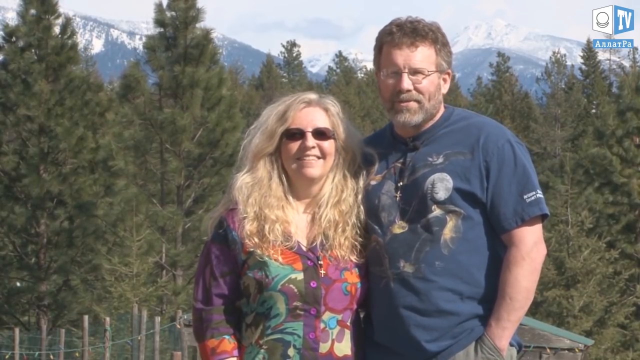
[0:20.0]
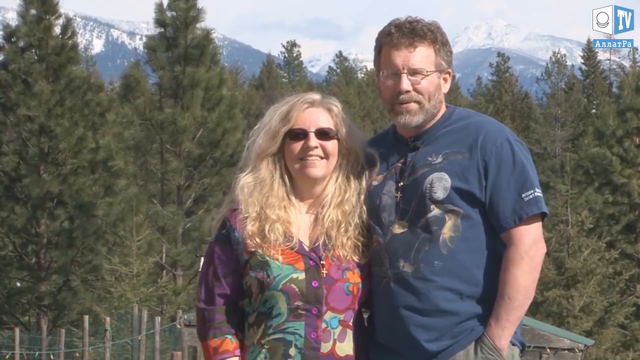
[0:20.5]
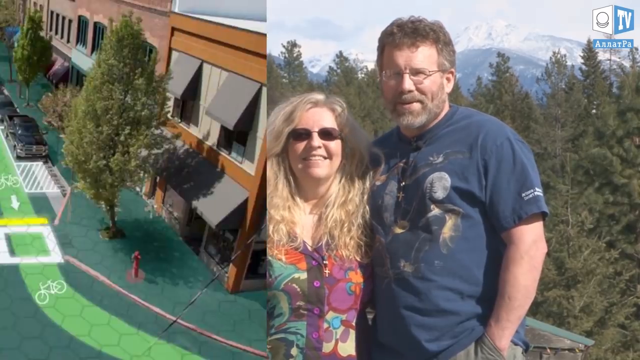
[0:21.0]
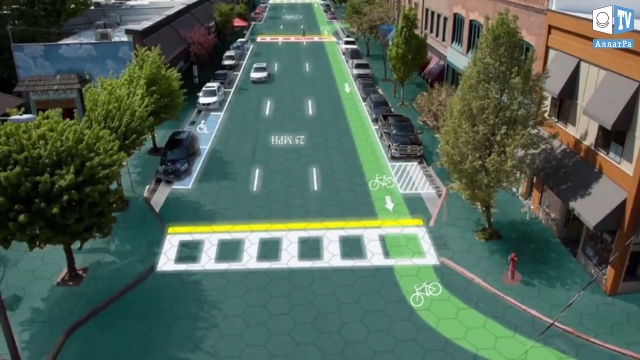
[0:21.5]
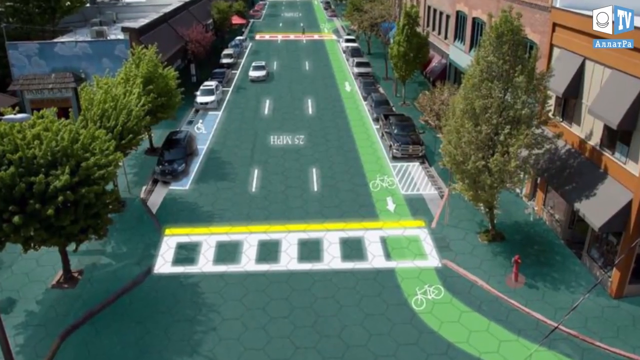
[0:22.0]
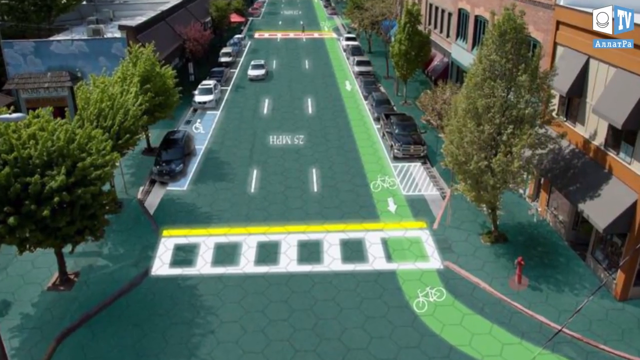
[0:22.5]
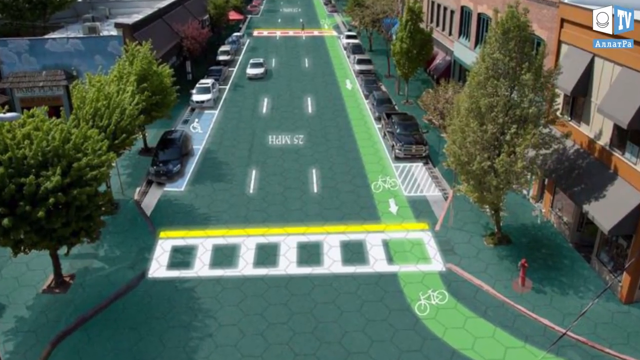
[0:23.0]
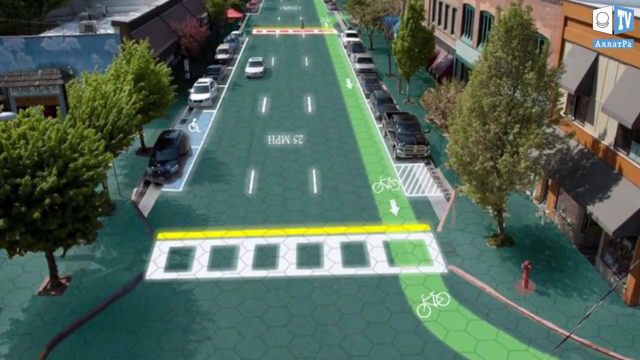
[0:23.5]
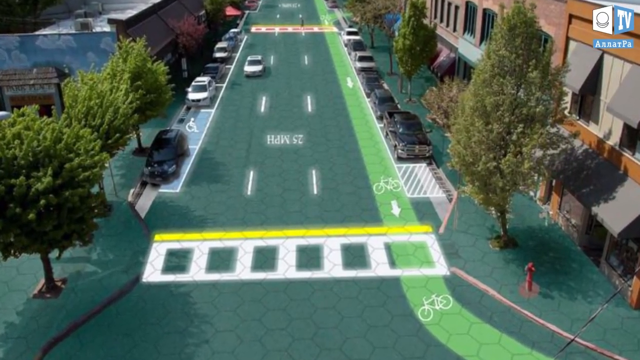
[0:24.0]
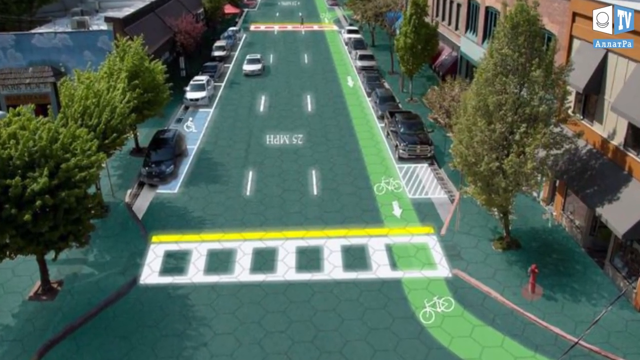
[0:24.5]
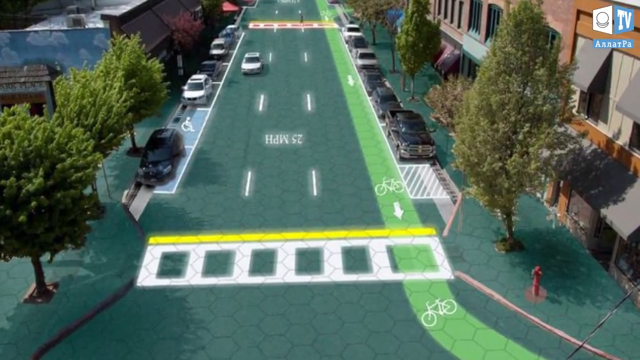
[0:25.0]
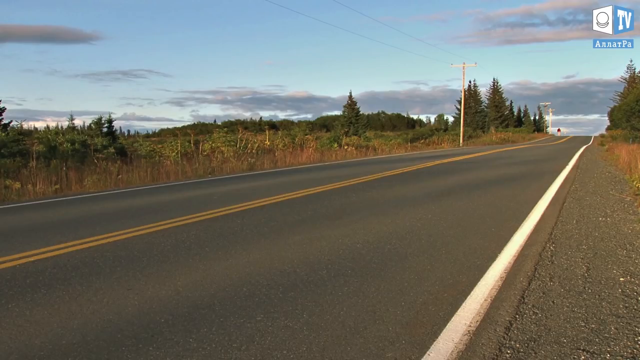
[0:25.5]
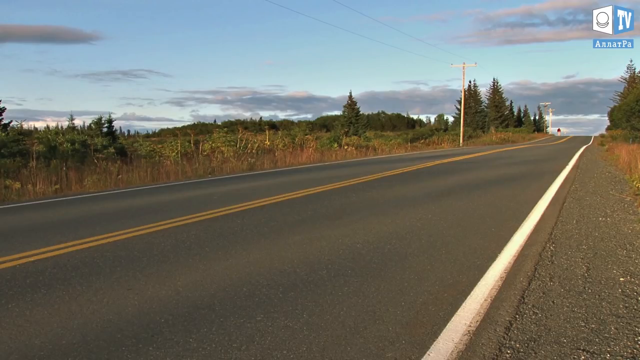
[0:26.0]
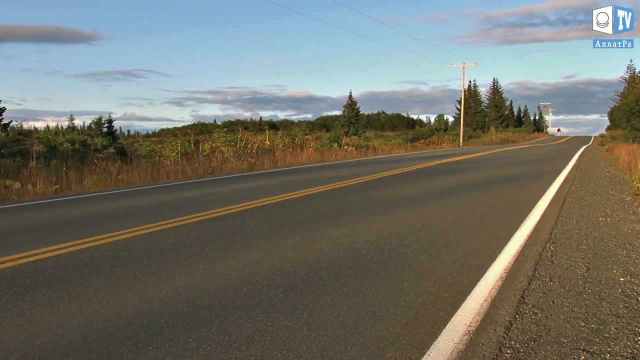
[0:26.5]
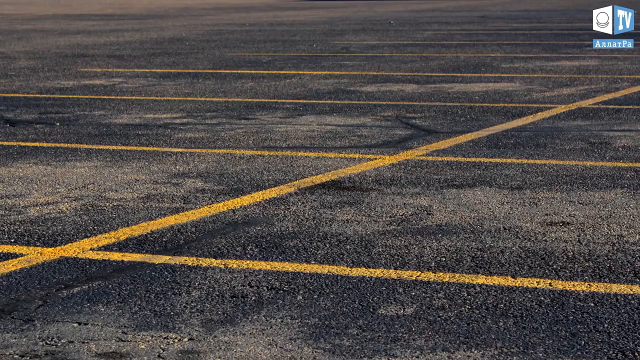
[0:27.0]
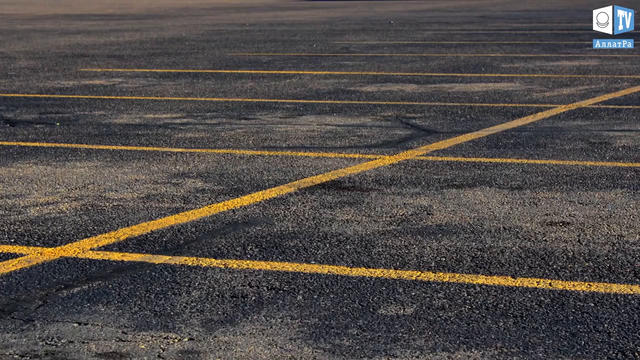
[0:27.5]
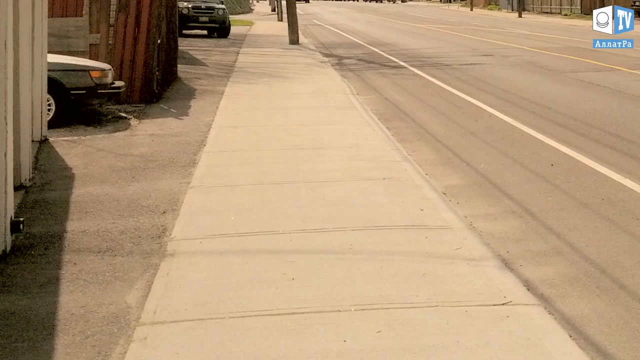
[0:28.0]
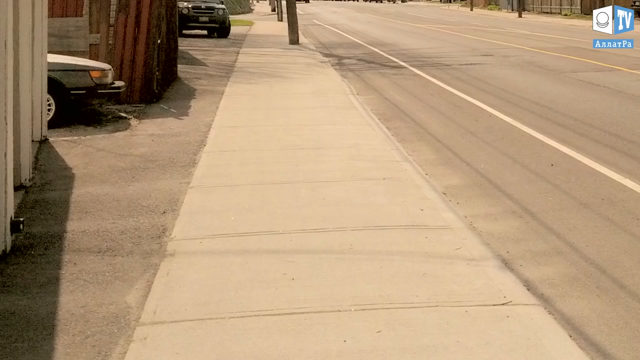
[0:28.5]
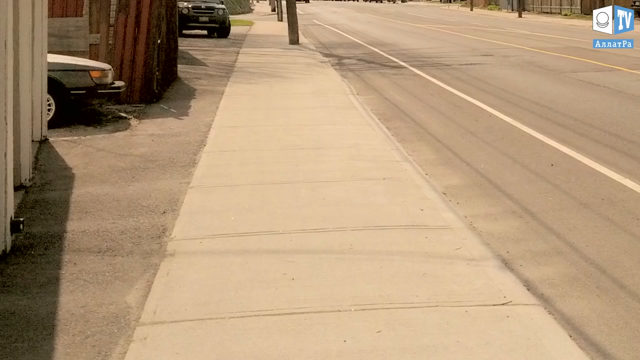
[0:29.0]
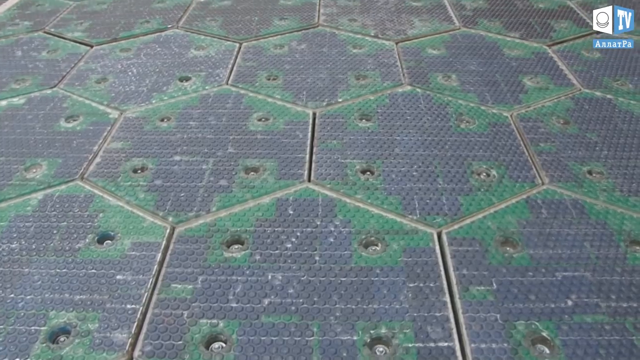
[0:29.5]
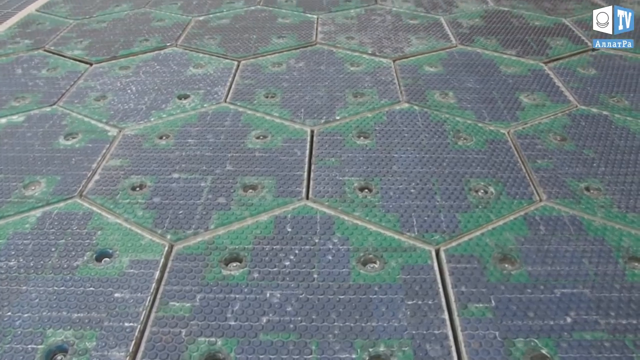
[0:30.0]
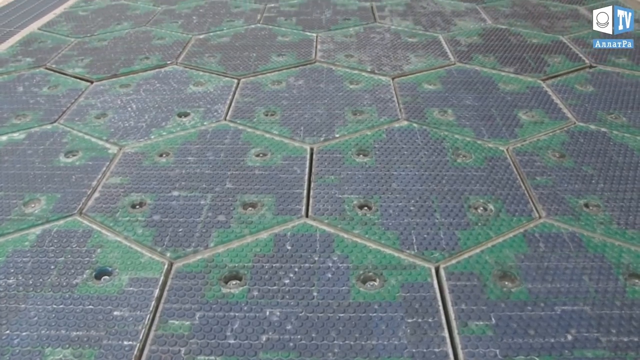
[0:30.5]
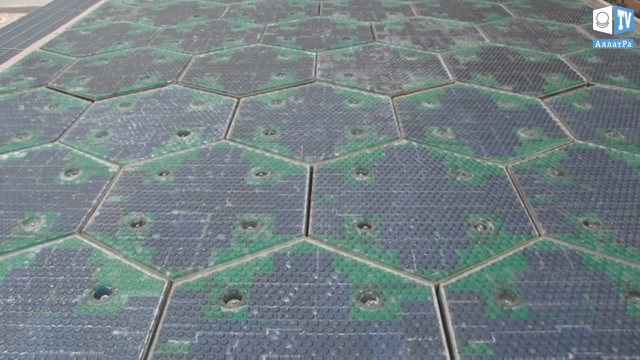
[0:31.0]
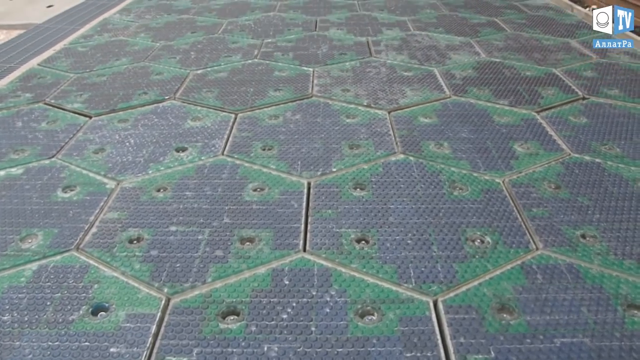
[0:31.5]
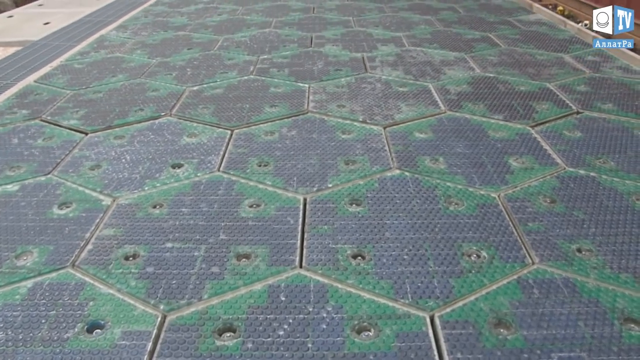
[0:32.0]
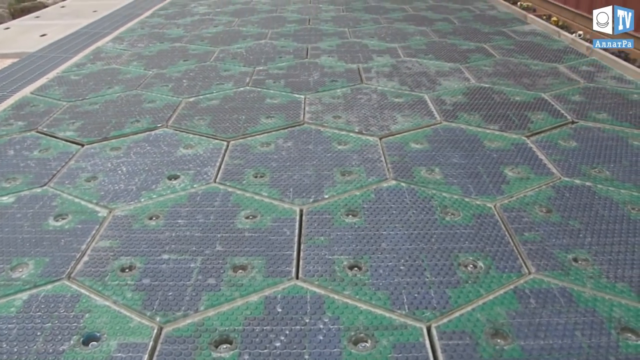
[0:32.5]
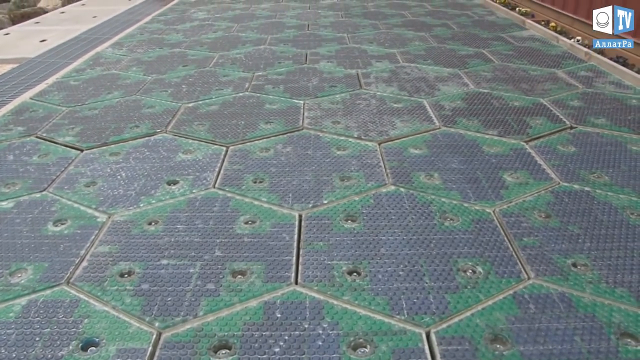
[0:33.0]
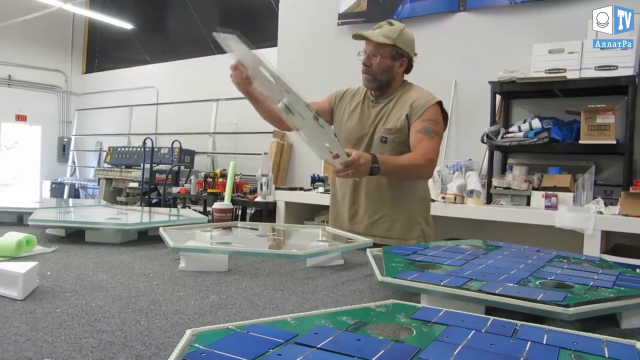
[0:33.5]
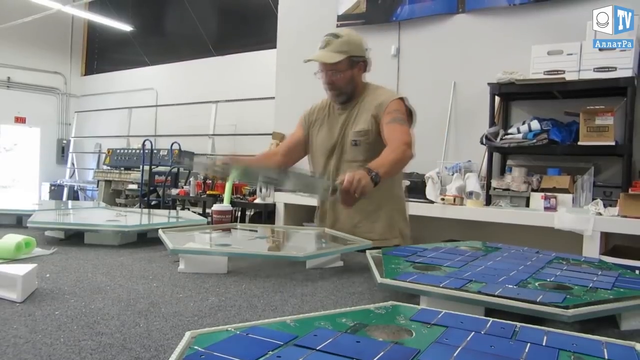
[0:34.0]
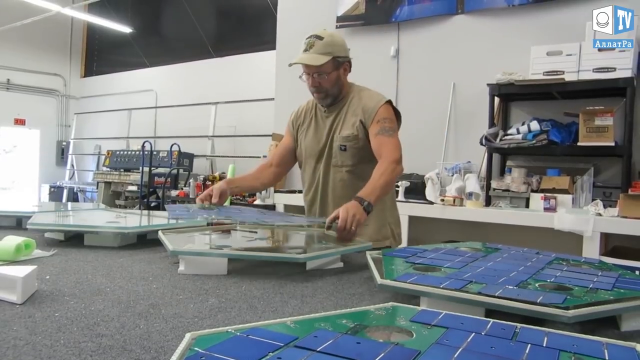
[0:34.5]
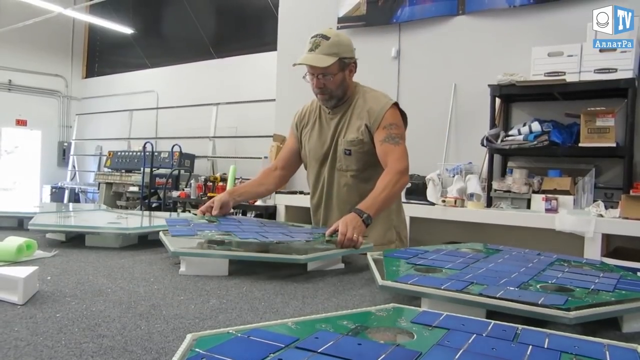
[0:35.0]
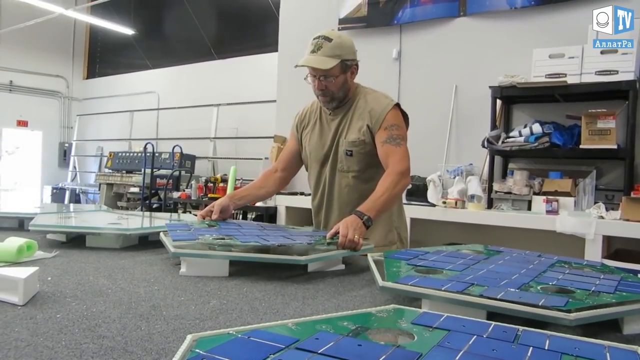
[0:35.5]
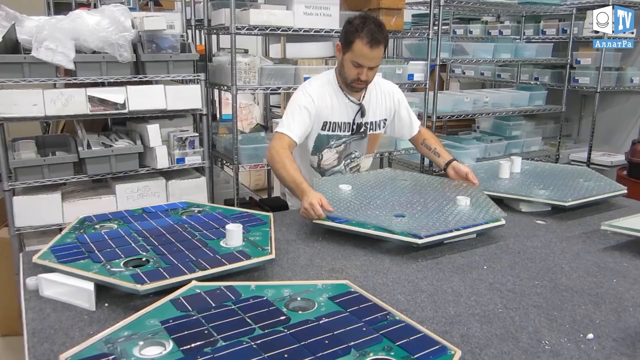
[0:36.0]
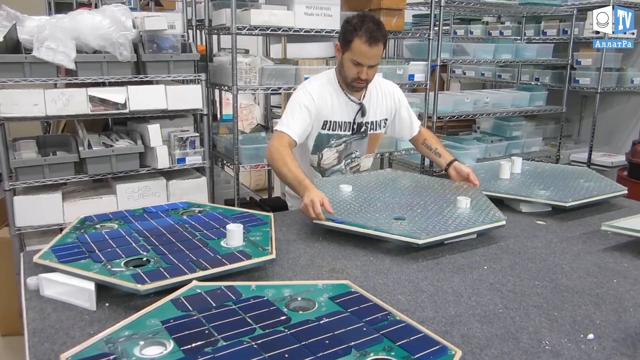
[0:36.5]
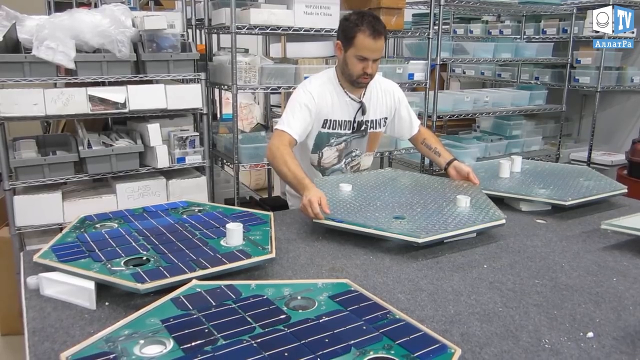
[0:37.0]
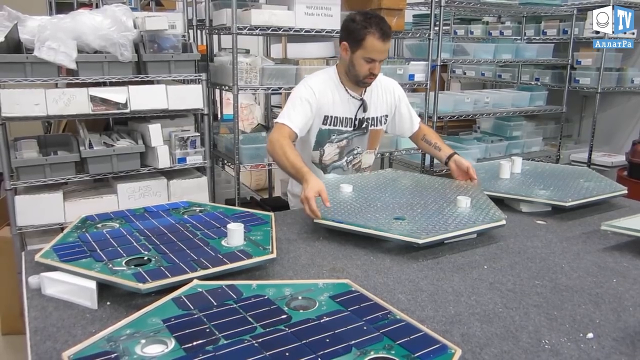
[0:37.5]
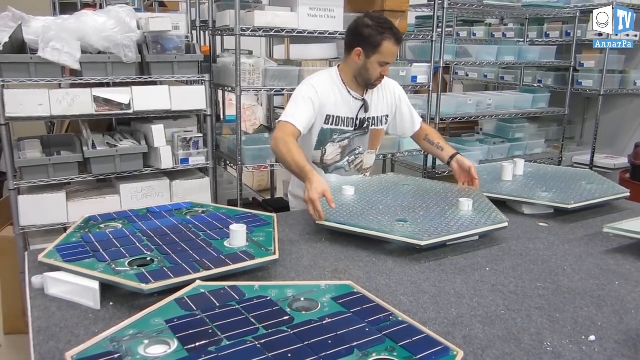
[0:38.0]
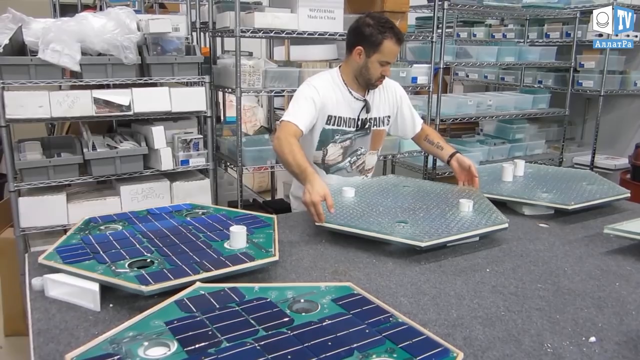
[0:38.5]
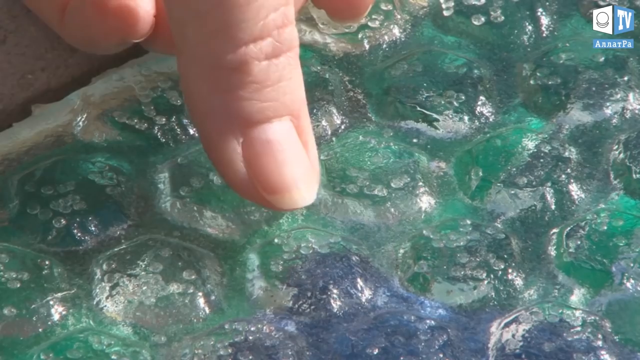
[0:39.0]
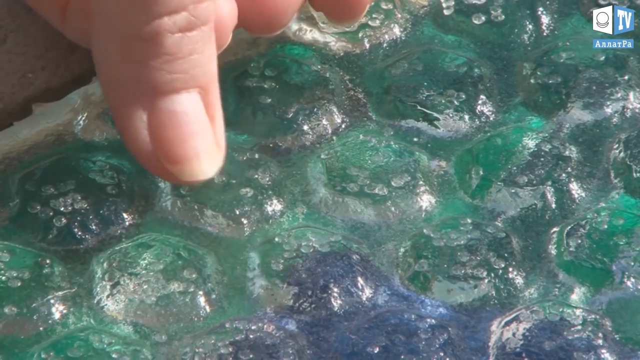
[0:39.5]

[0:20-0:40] The outdoor area appears, with the blue letters in blue bubble font. The man wears high boots, shorts with big side pockets, and gloves. A green mat, green and dark blue or black, is next to a red house with a white door. Two people stand outside near a lot of woods. The man wears a blue shirt and green pants, has a beard and kind of grayish hair, and wears prescription glasses. The woman wears a kind of reddish shirt with black pants, has kind of blondish hair, and wears sunglasses. Next, a green road in the city appears with lots of trees. The road is mostly green, with the sidewalk a kind of fluorescent green. Brown brick buildings line the side, and a couple of trees on the sidewalk are separated by lots of concrete. There is a crosswalk for bicycles with about four lines in the middle of it, and a yellow line. One car drives on the road and two are on the side.